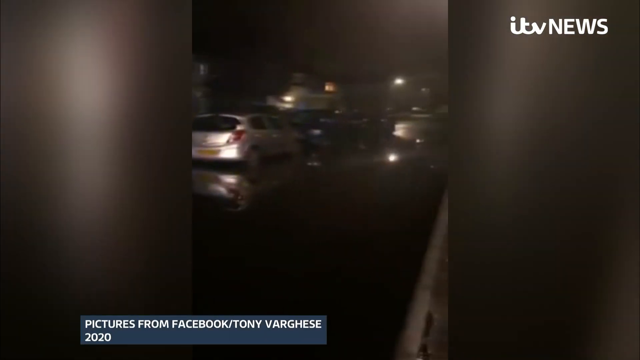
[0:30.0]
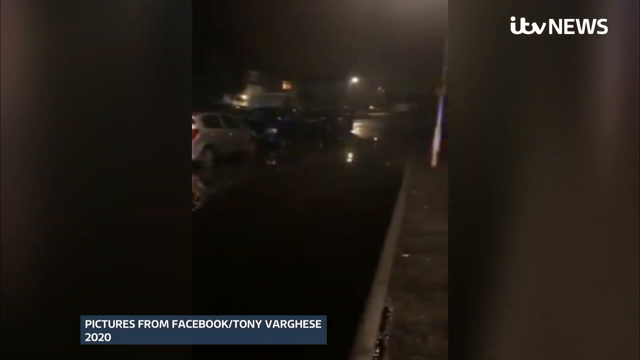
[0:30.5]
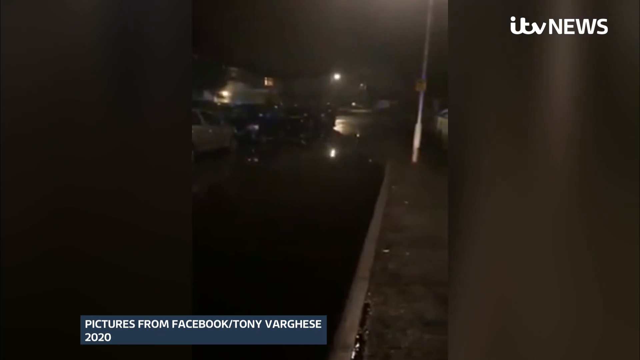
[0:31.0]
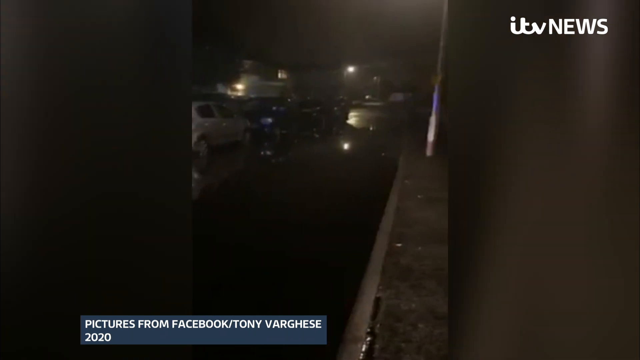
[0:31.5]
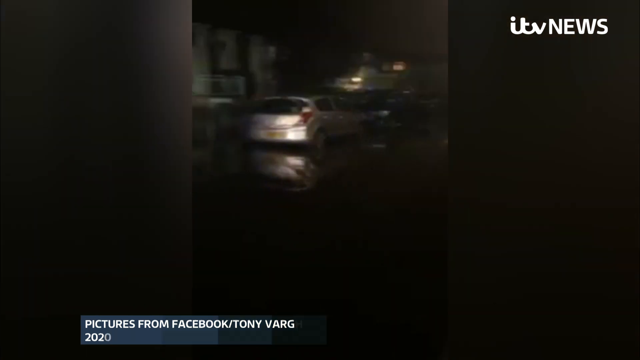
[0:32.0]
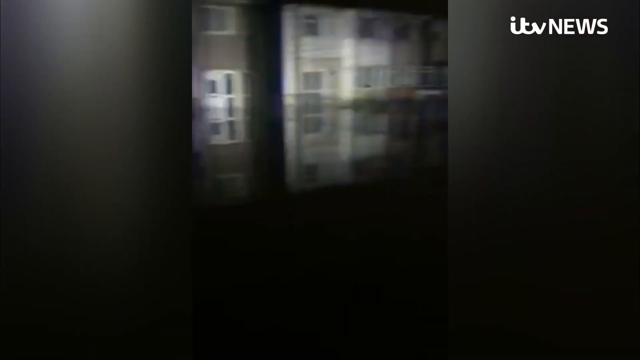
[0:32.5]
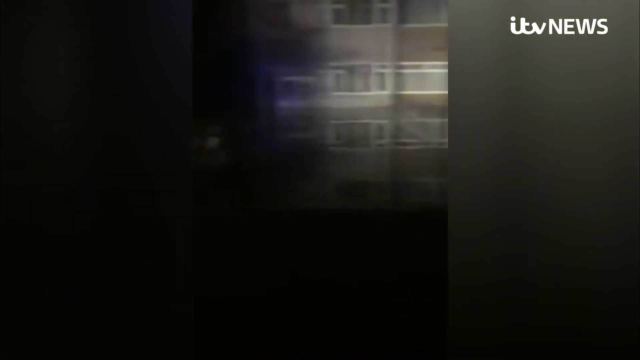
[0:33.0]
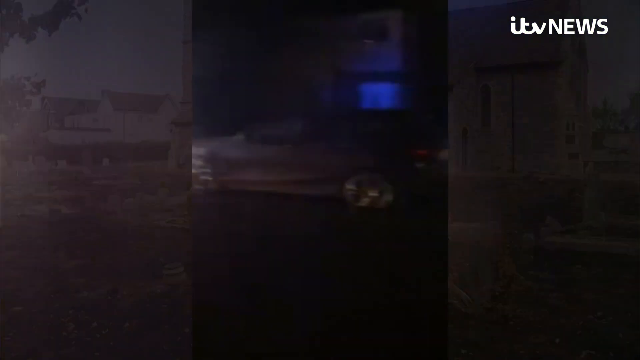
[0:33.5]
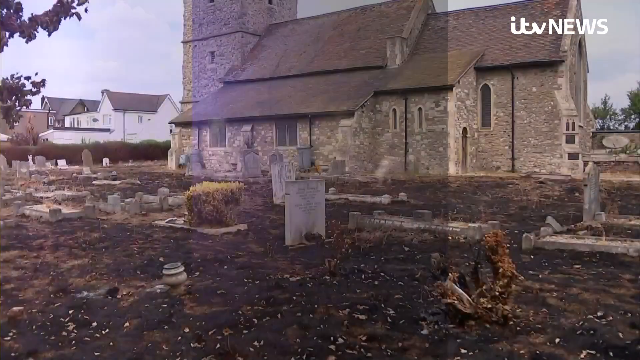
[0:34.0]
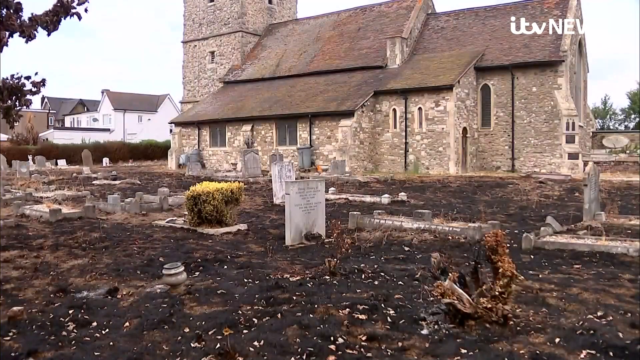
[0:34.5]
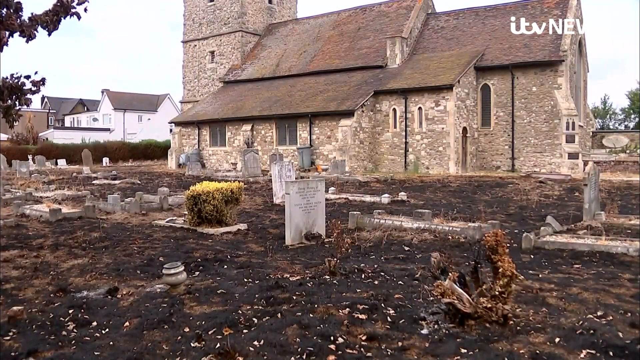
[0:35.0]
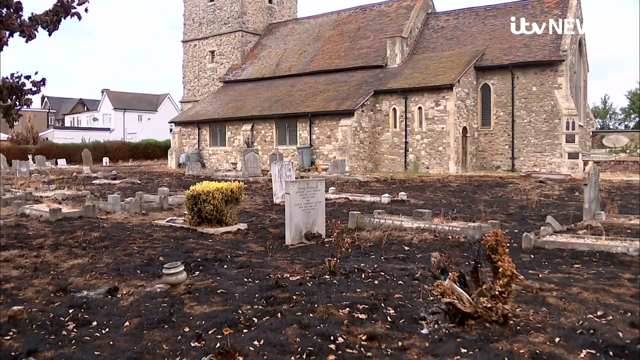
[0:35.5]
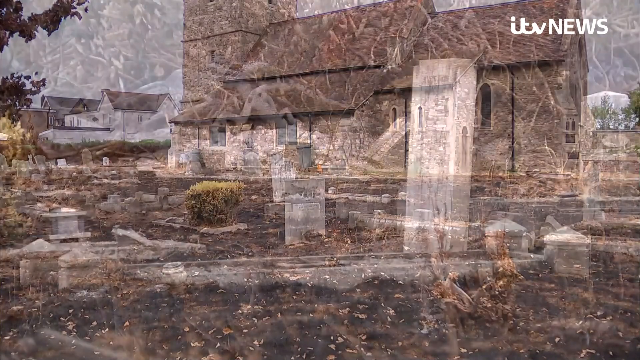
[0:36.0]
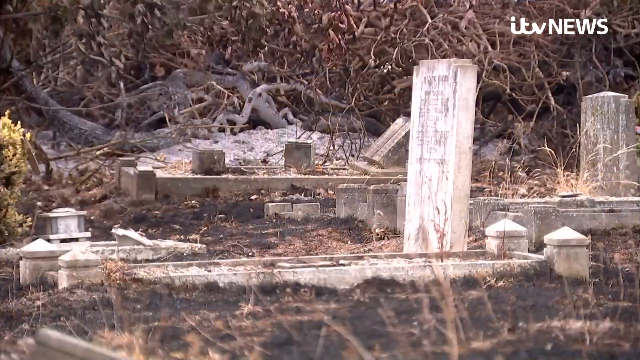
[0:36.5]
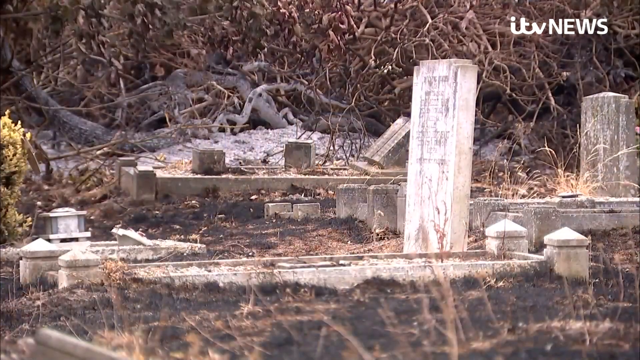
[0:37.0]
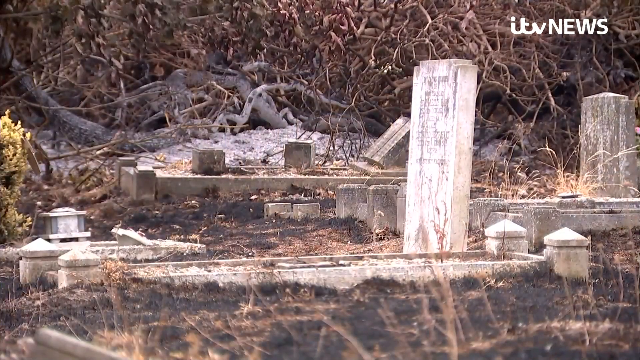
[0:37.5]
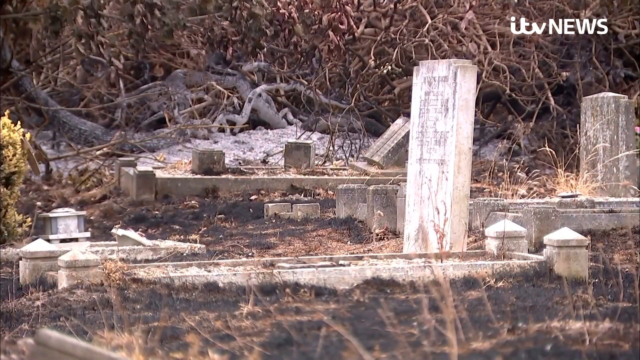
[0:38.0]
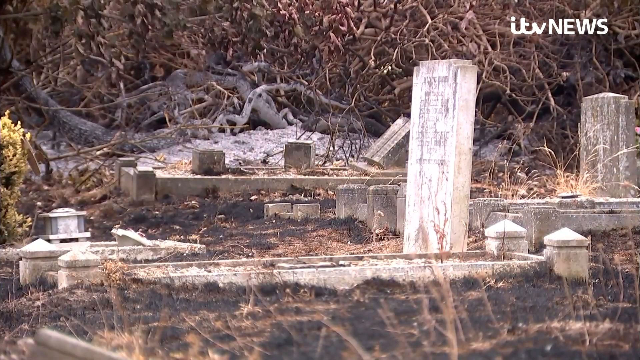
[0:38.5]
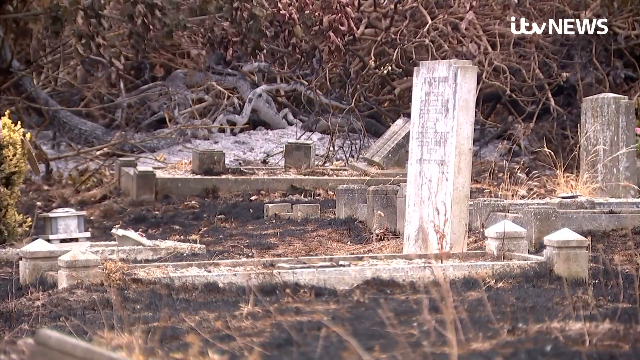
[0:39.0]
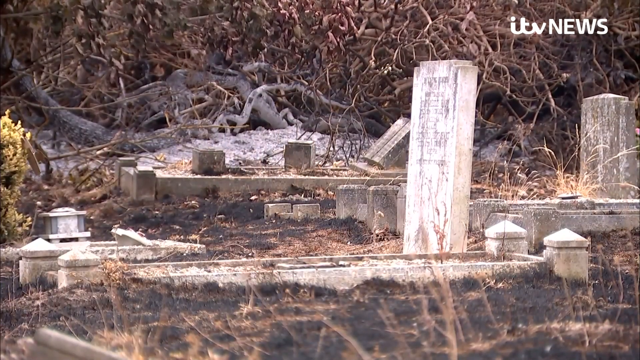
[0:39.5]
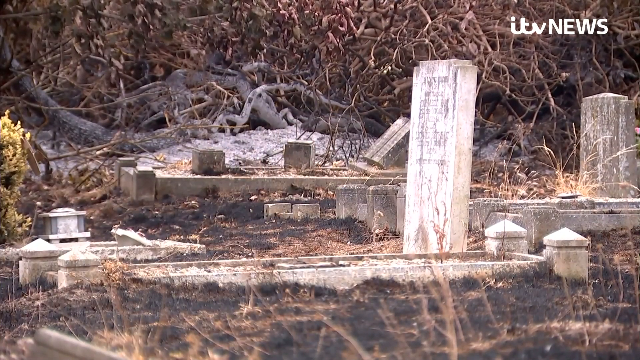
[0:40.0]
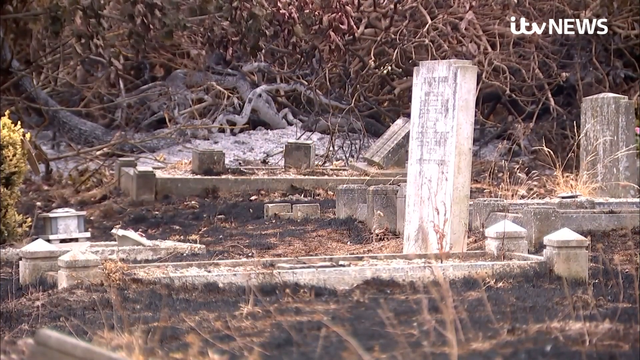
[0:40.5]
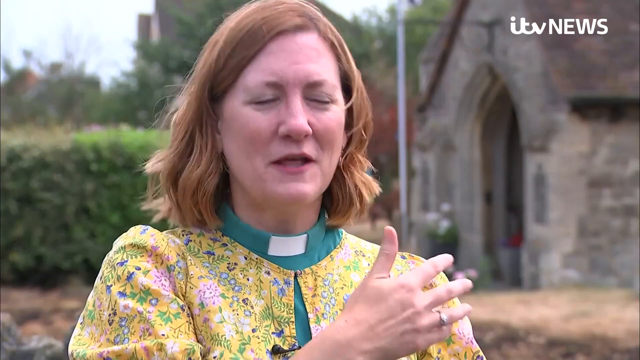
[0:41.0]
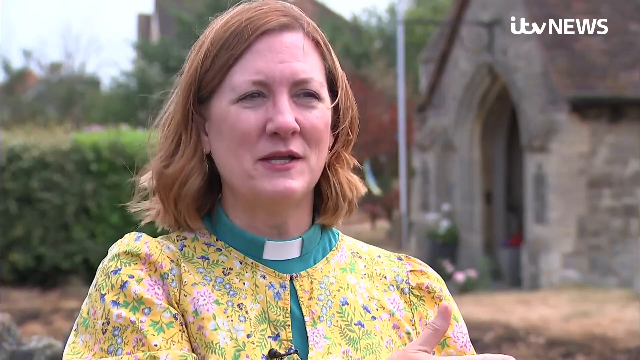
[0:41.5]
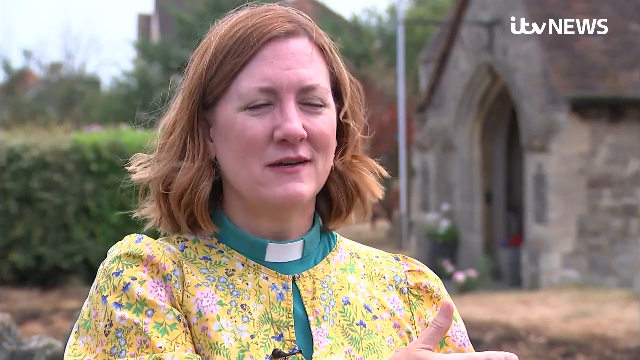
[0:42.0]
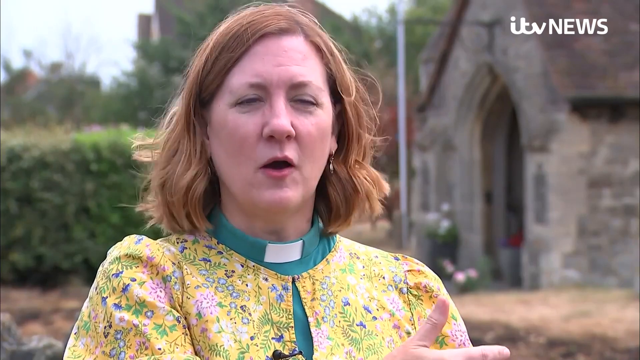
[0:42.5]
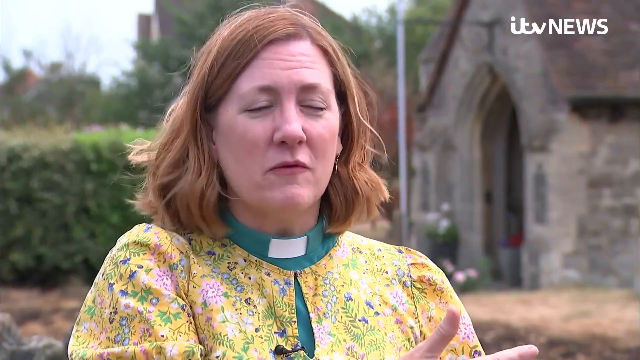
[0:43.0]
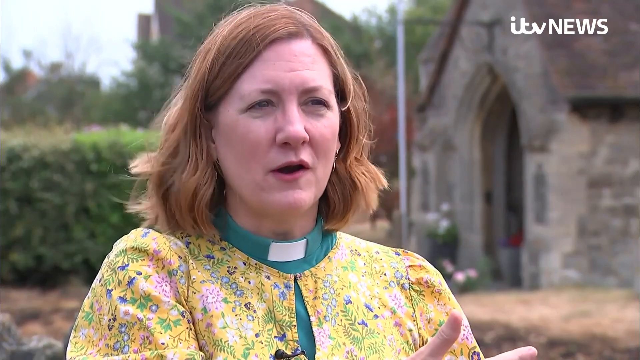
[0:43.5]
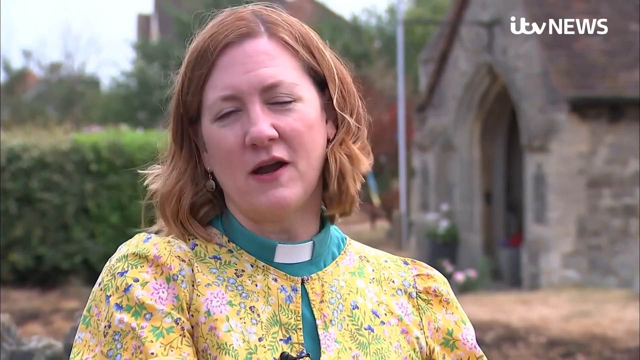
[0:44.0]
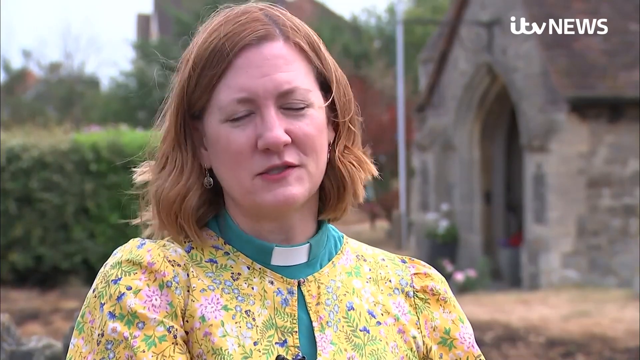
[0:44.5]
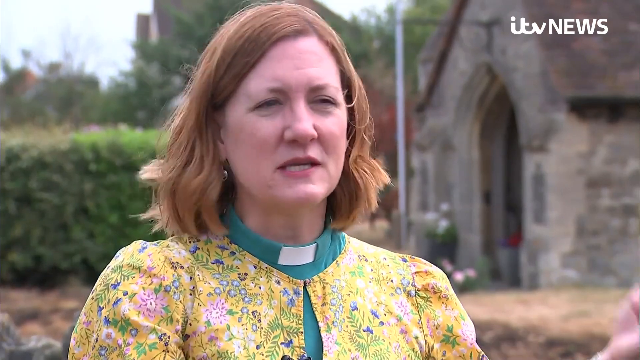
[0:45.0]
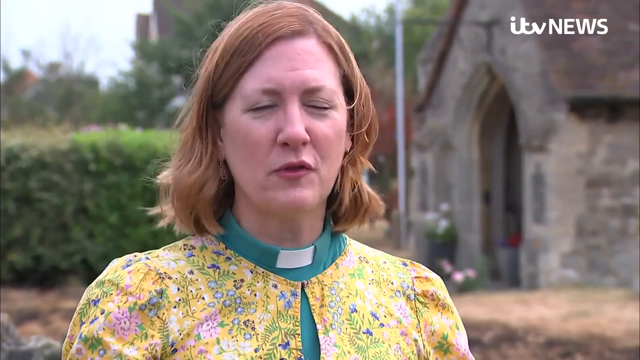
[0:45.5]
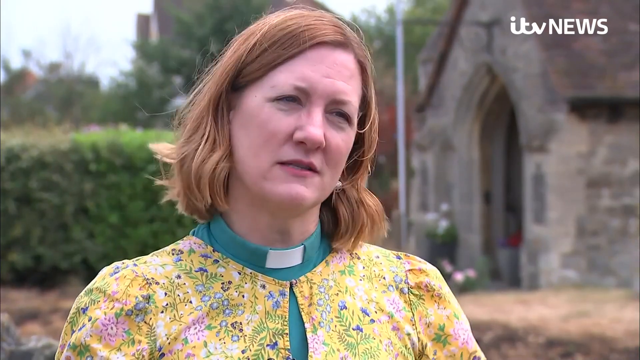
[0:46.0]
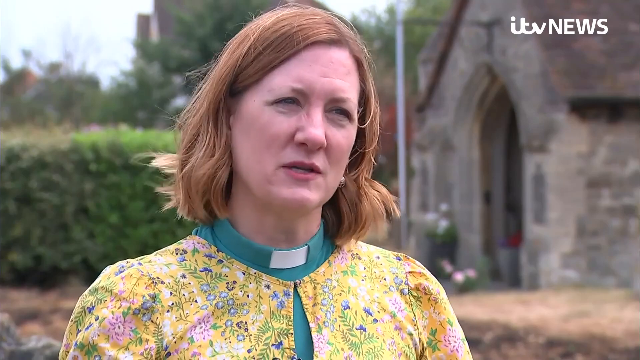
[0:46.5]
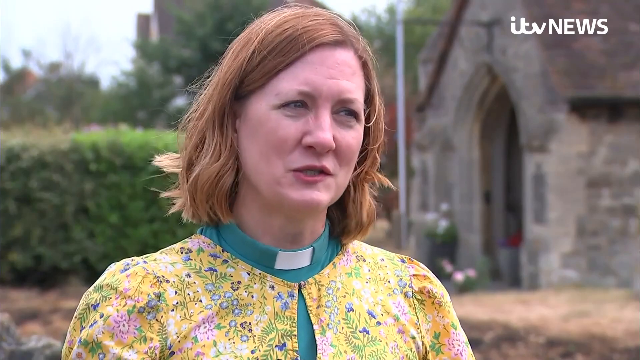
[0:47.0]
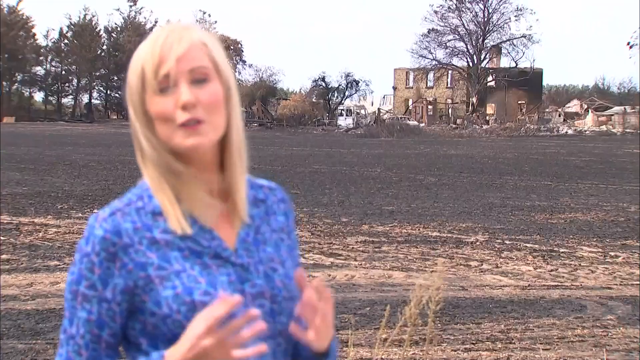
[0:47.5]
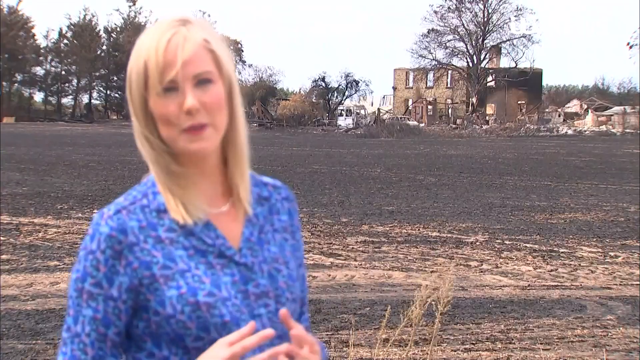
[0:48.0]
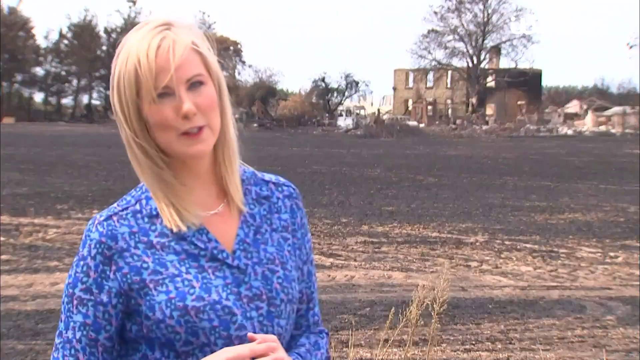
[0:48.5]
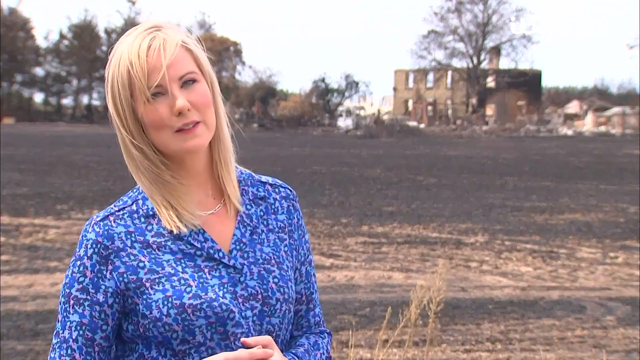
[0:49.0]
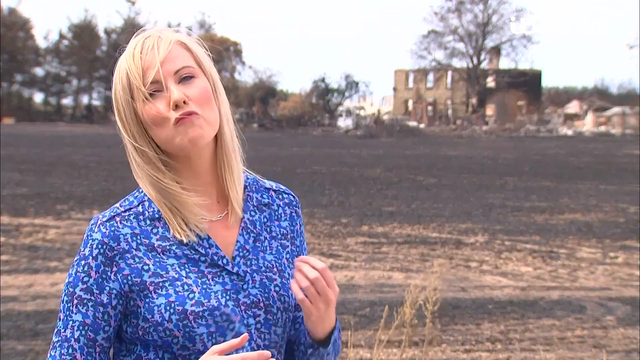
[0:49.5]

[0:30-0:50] A night scene shows nothing clearly, only some lights in the center, with "ITV News" in the upper left corner. The scene changes to a stone church with a graveyard outside it and a white house in back of the church. Close-ups of the graves show taller and shorter headstones, and one headstone is toppled over in the back near a wooded area. A woman with shoulder-length red hair then speaks to the camera. She wears a green top with what looks like a priest's white collar in the center, with a yellow floral top over it, and she is standing in front of the church, with a hedge behind her on the left. Another woman then speaks to the camera. She has blonde shoulder-length hair, wears a dark and light blue designed shirt and a thin gold necklace. Behind her is a large vacant brown field with a row of trees in the background, and on the upper right are the ruins of a brick building with no windows, doors or roof.